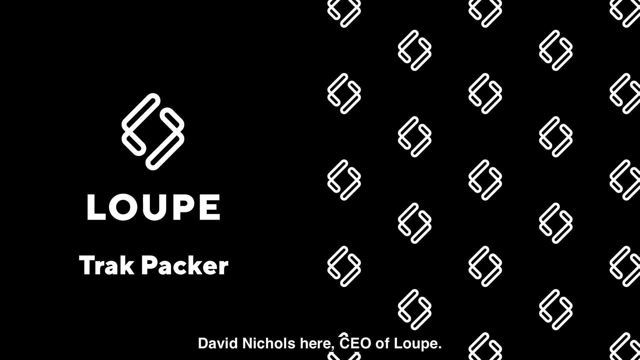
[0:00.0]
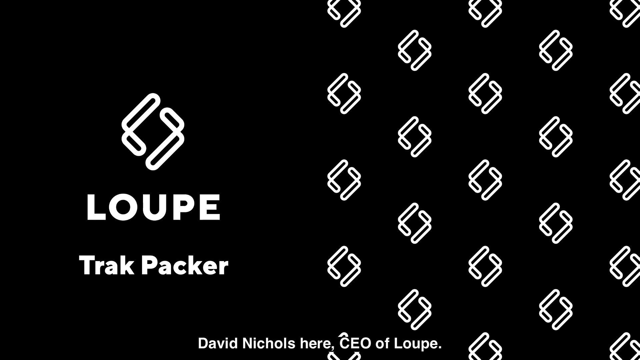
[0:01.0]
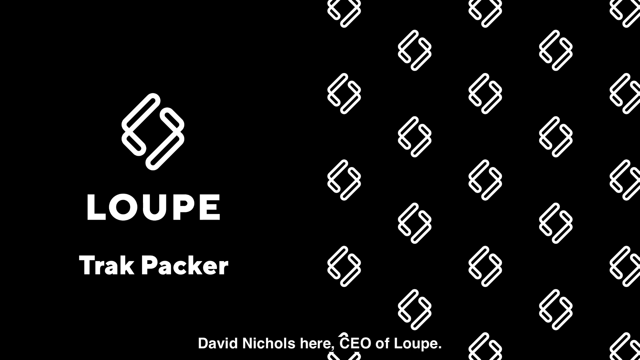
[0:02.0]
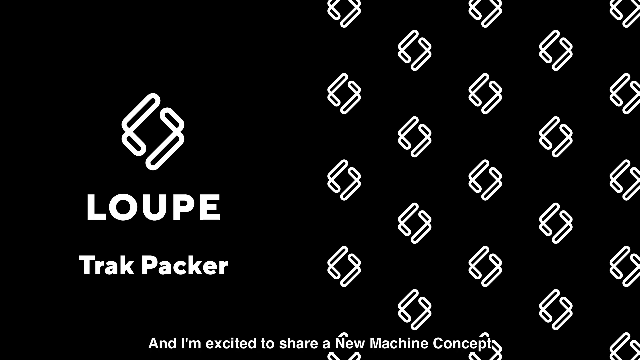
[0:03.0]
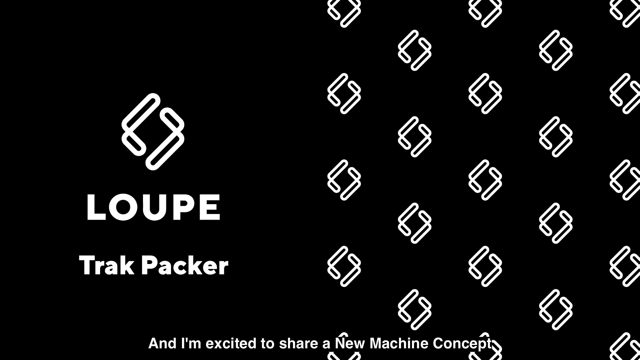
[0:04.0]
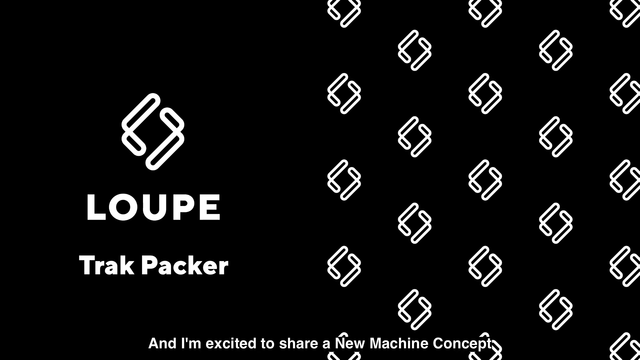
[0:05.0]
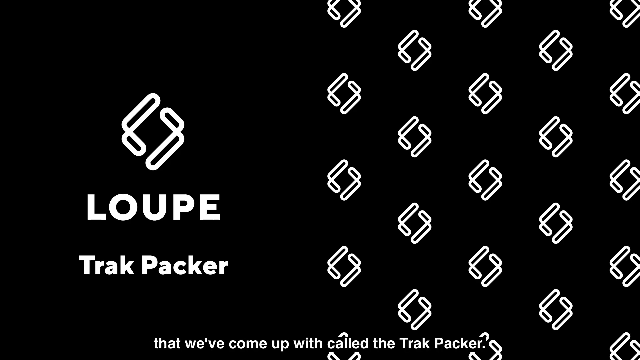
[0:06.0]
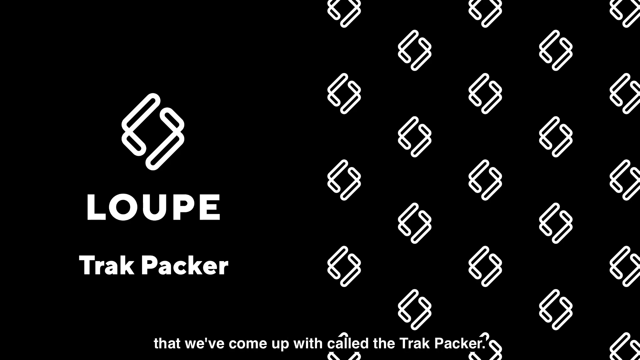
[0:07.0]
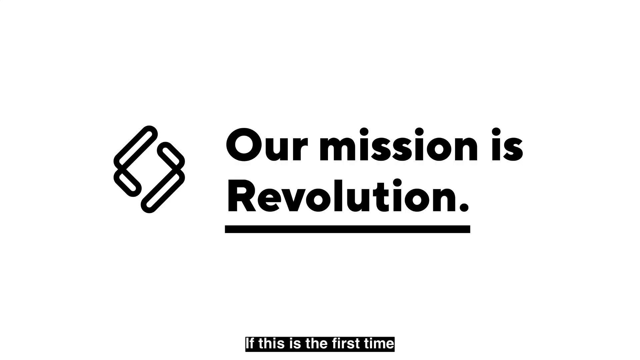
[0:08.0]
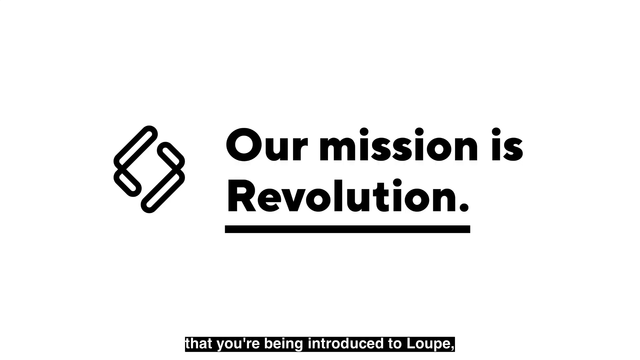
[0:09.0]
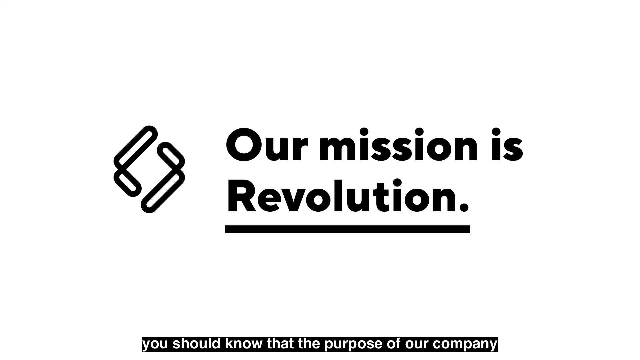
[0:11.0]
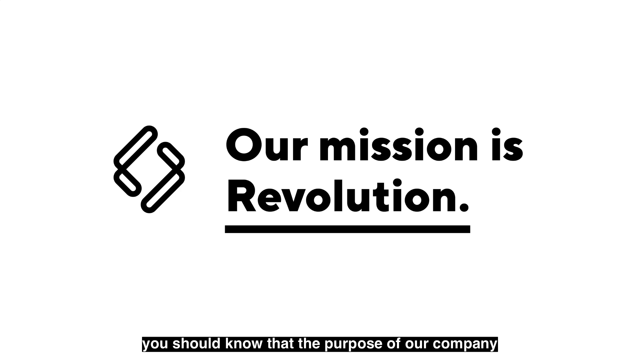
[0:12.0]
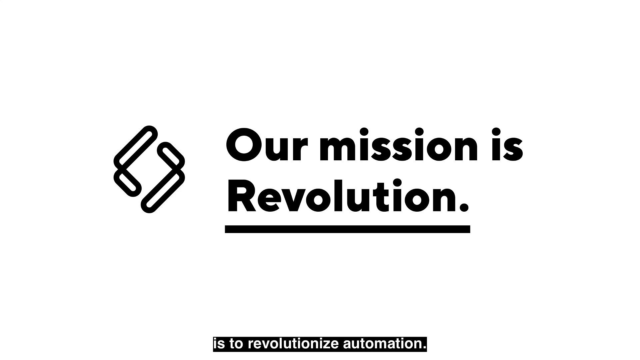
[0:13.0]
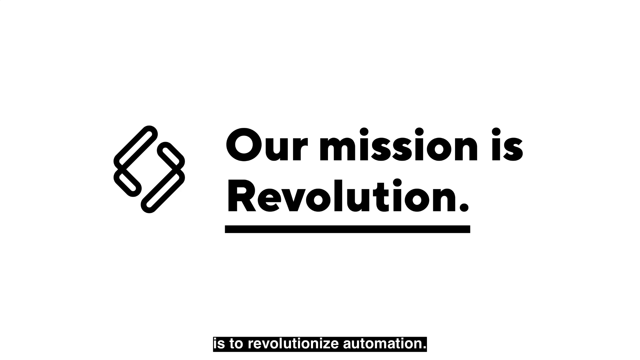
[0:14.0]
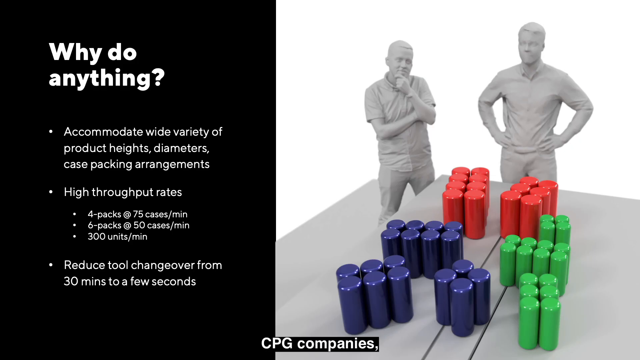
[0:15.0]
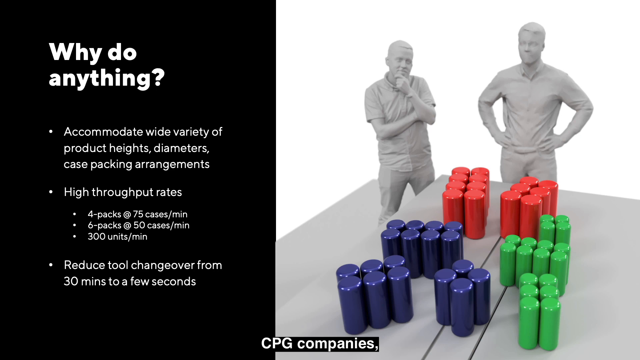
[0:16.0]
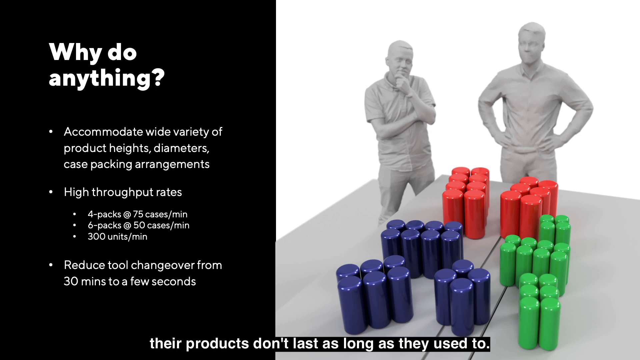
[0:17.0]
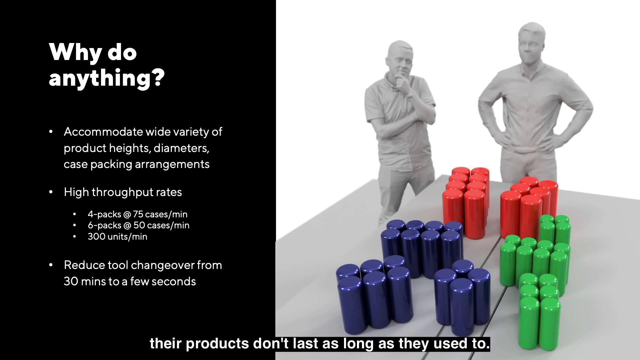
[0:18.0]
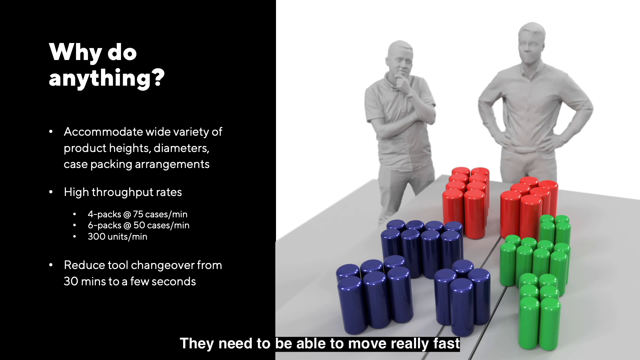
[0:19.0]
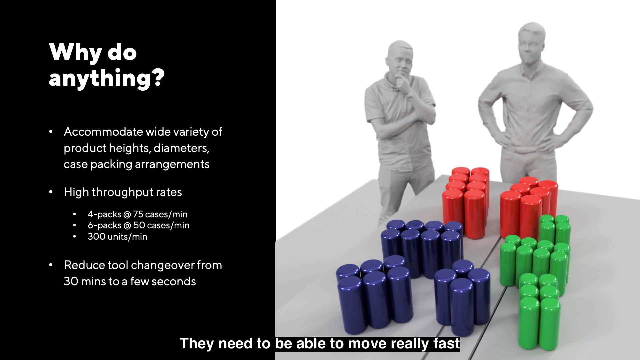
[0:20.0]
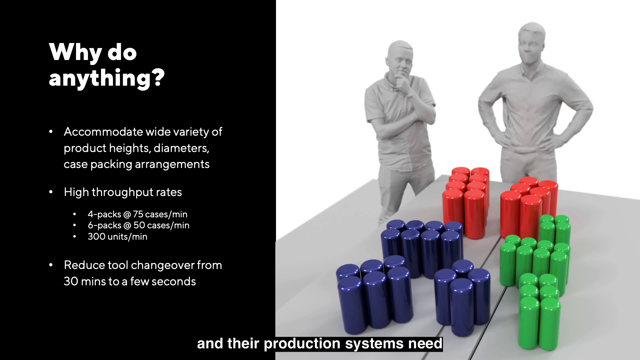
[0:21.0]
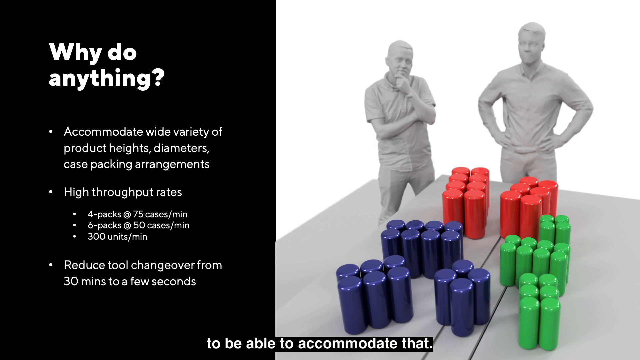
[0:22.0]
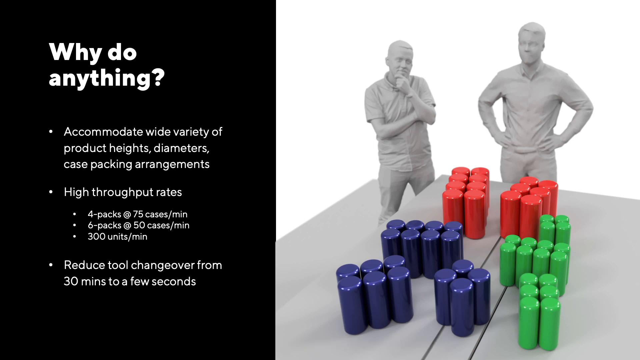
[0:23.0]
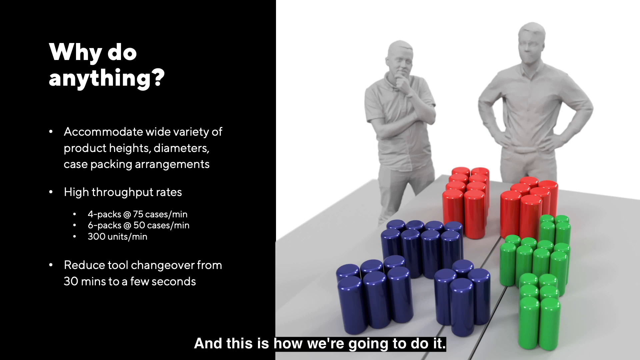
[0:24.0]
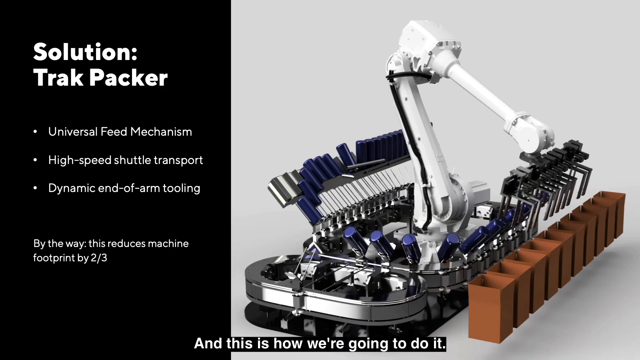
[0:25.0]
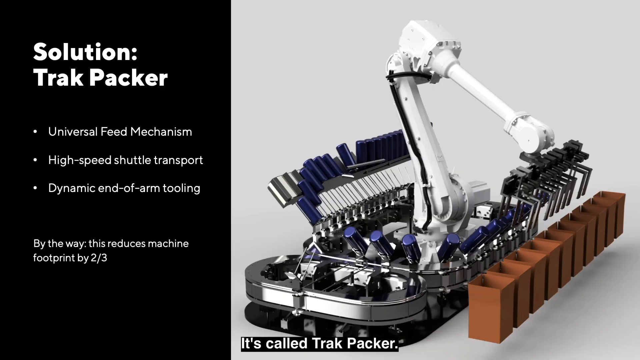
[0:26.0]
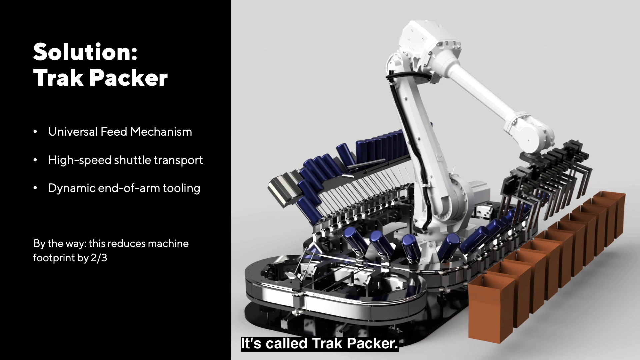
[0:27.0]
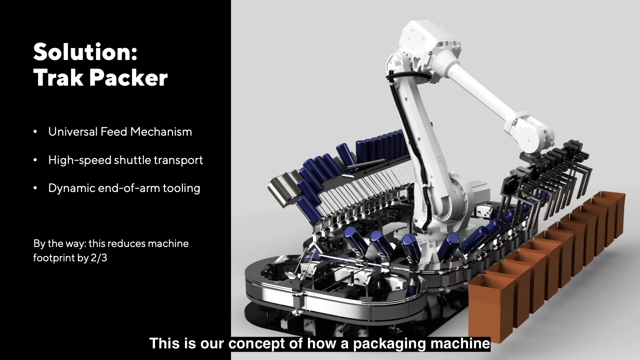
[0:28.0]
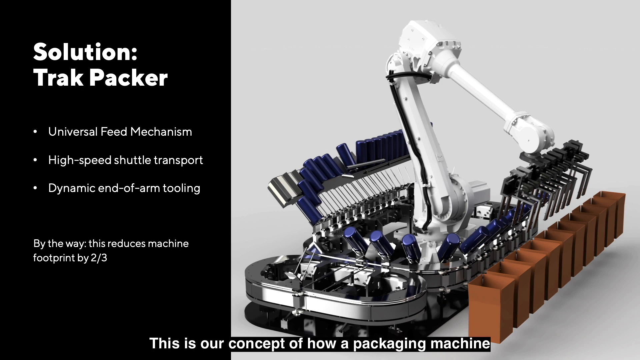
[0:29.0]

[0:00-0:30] This appears to be an advertisement for a product by Lupe Trackpacker. On-screen text reads "Our mission is revolution." A computer animation then shows two grayed-out men who look like statues, with groups of cylinders in front of them: two groups of red, three groups of blue and three groups of green. Text reads "Why do anything?" followed by "Accommodate wide variety of product heights, diameters, case packing arrangements" and "four packs, six packs, reduce tool changeover from 30 minutes to a few seconds." The product seems to be meant to make machine operation more efficient. The next screen shows a piece of machinery with the text "Solution Trackpacker, universal feed mechanism, high speed shuttle transport, dynamic end of arm tooling" and "This reduces machine footprint by two thirds."